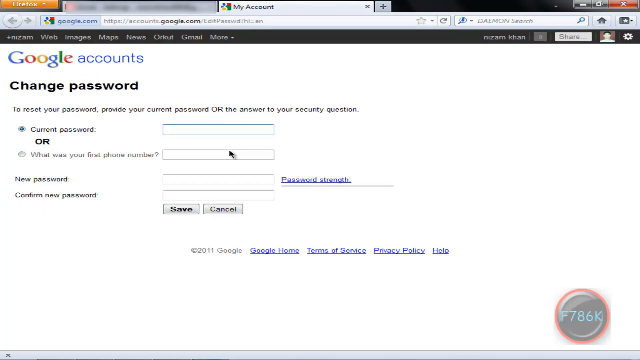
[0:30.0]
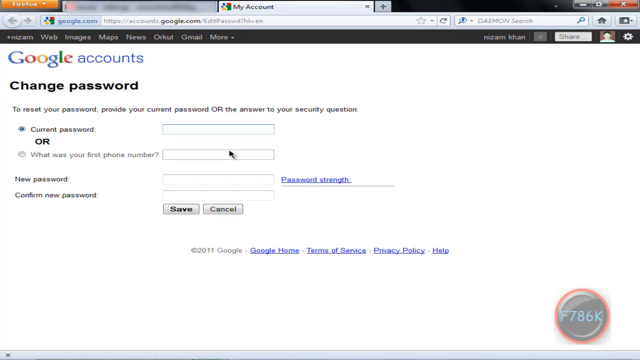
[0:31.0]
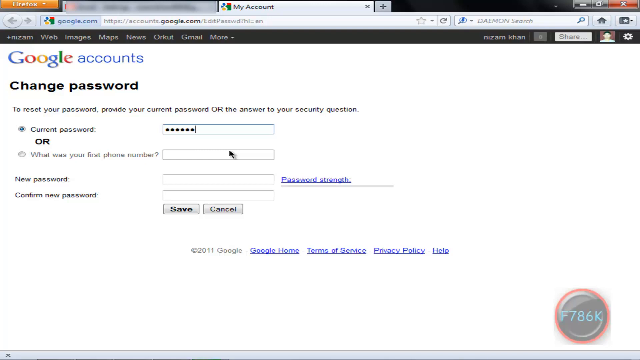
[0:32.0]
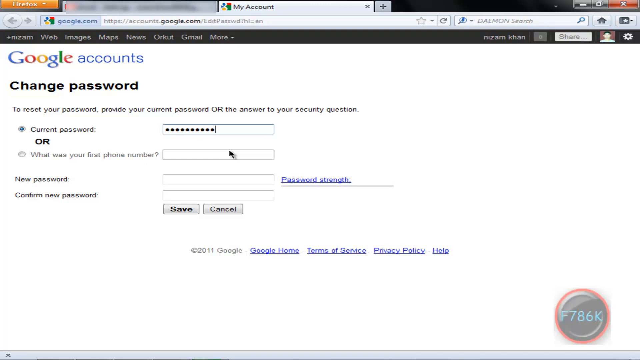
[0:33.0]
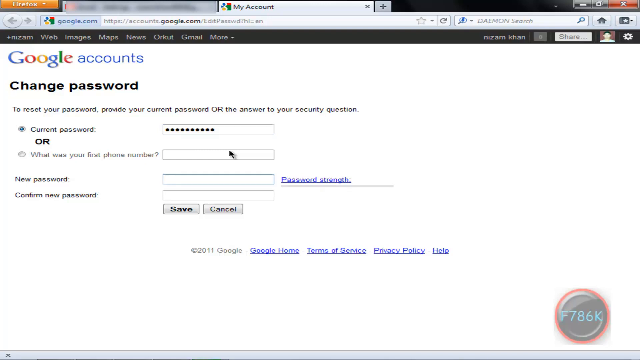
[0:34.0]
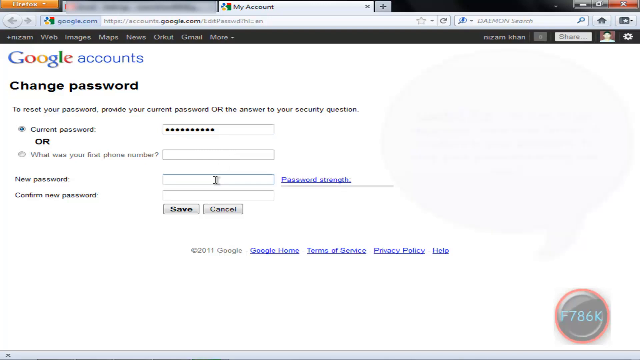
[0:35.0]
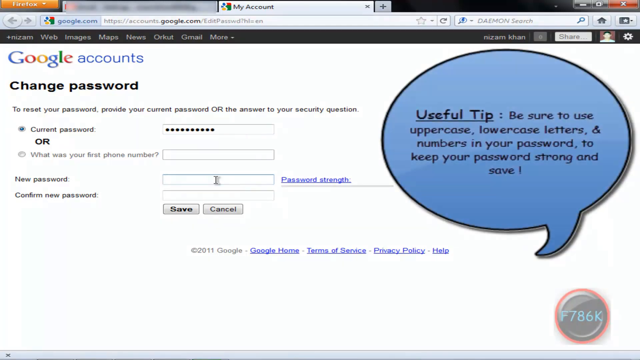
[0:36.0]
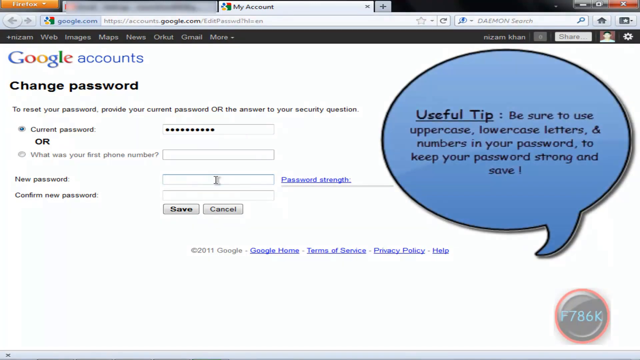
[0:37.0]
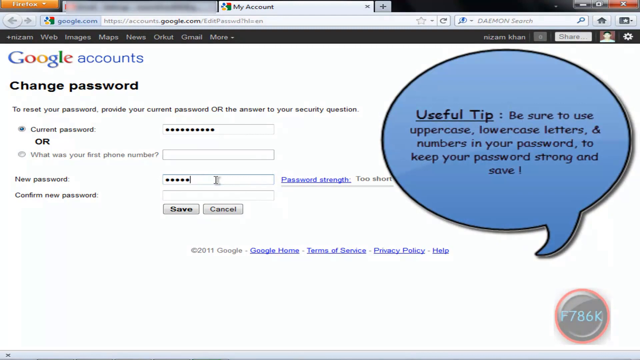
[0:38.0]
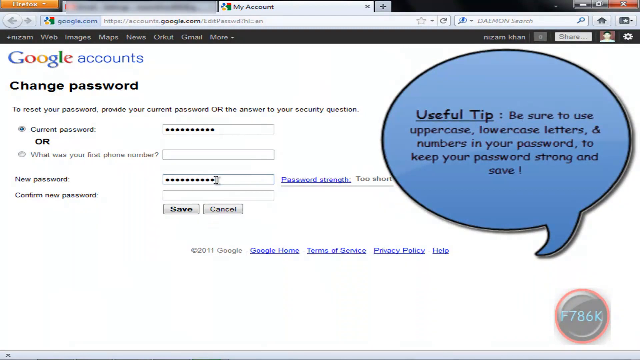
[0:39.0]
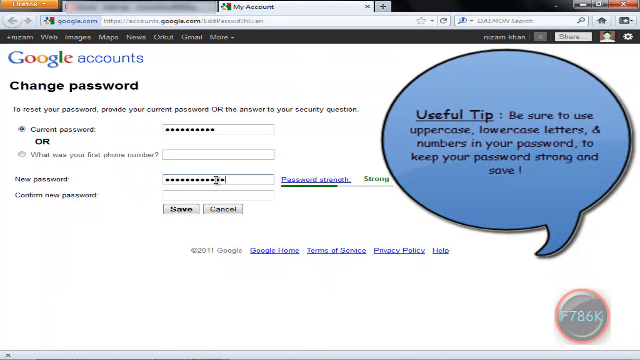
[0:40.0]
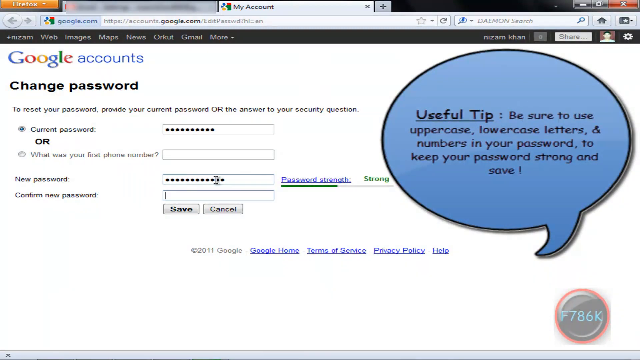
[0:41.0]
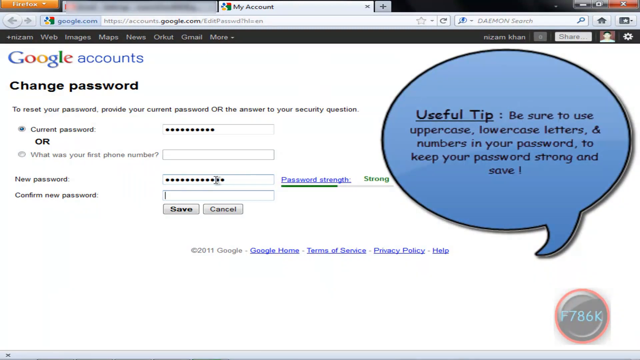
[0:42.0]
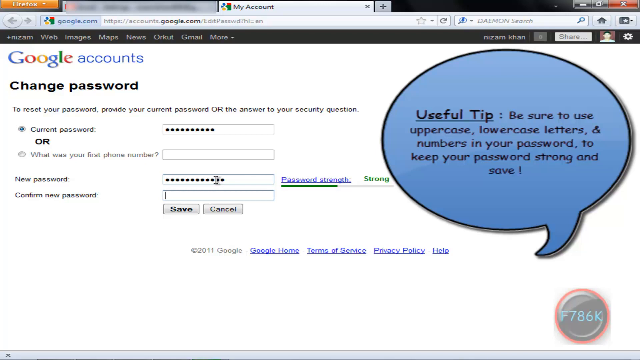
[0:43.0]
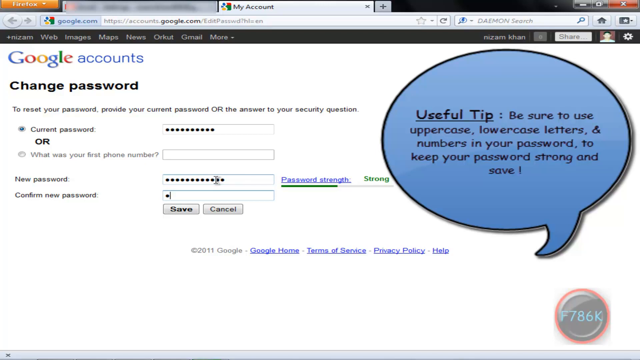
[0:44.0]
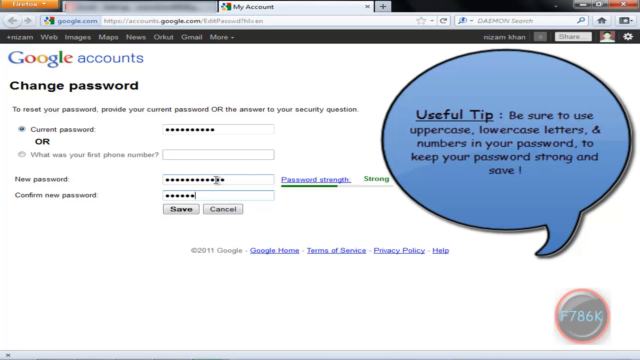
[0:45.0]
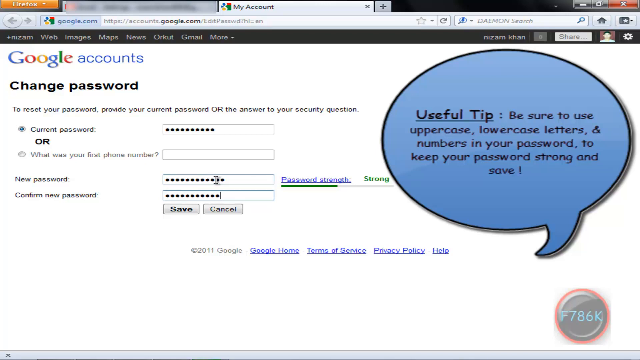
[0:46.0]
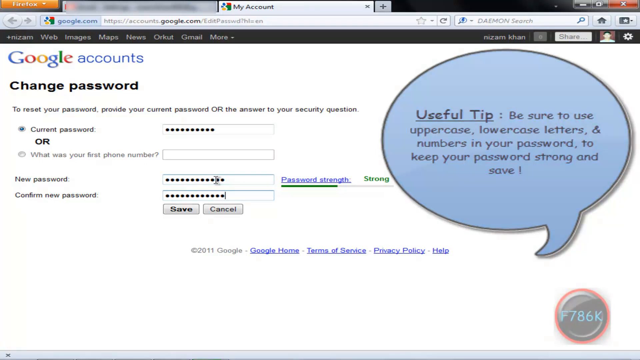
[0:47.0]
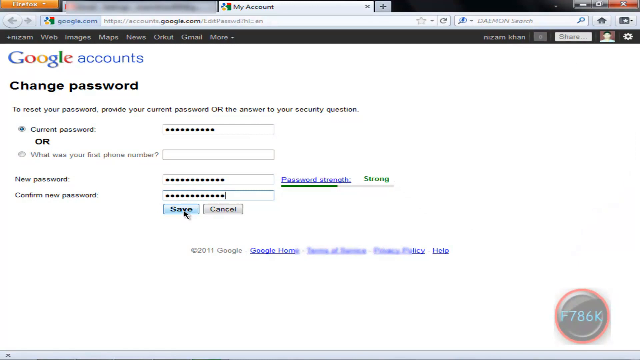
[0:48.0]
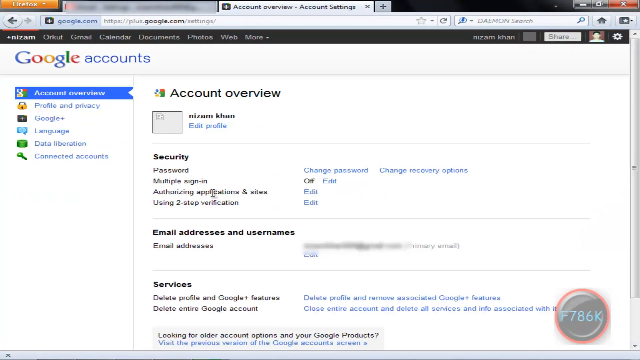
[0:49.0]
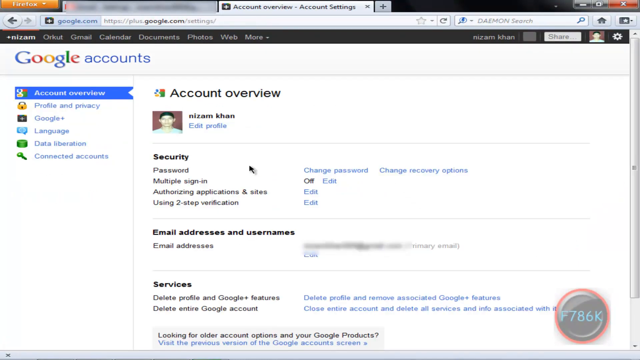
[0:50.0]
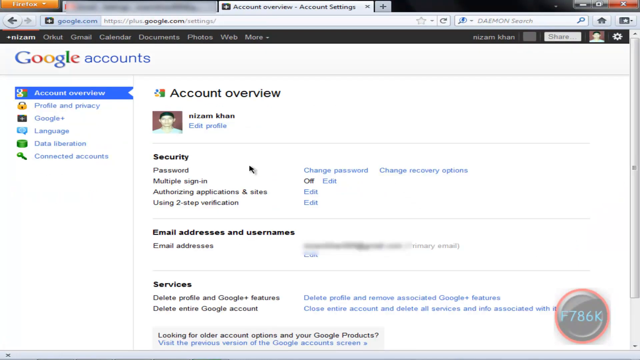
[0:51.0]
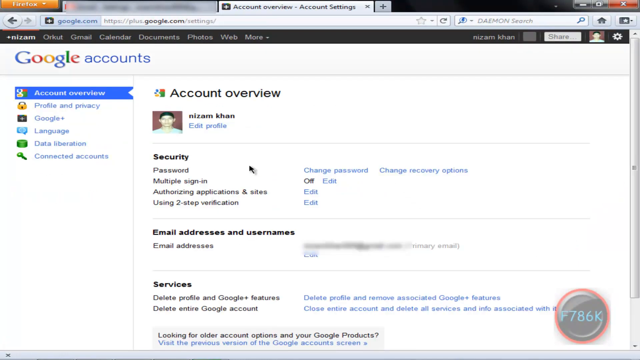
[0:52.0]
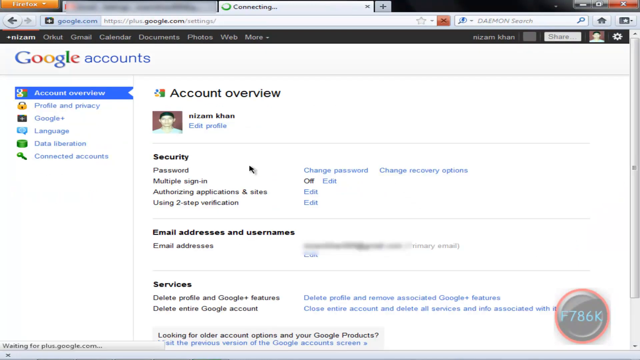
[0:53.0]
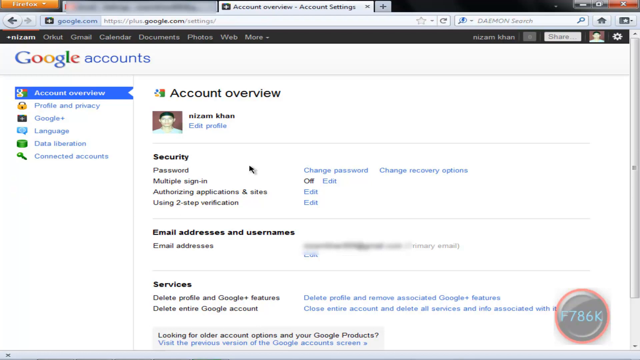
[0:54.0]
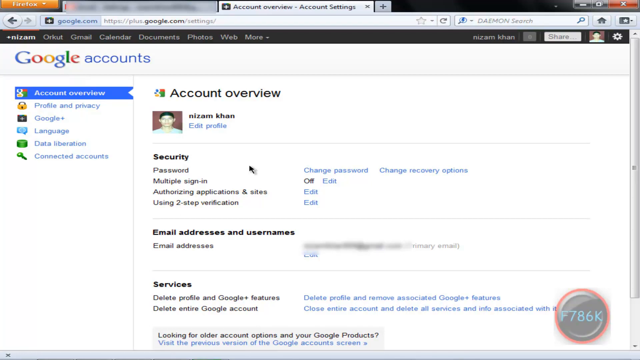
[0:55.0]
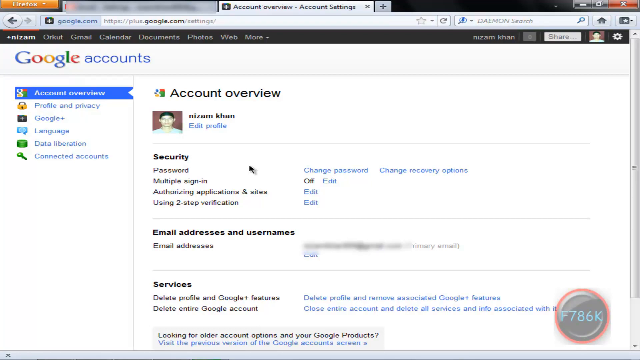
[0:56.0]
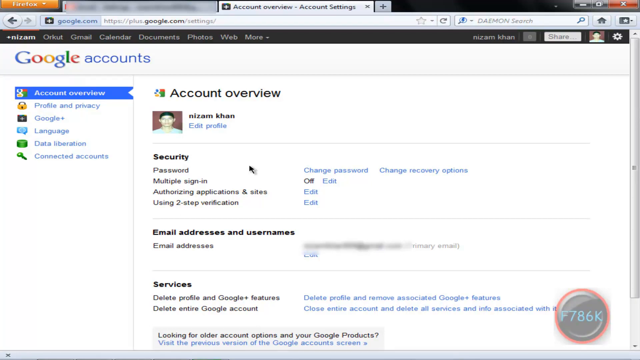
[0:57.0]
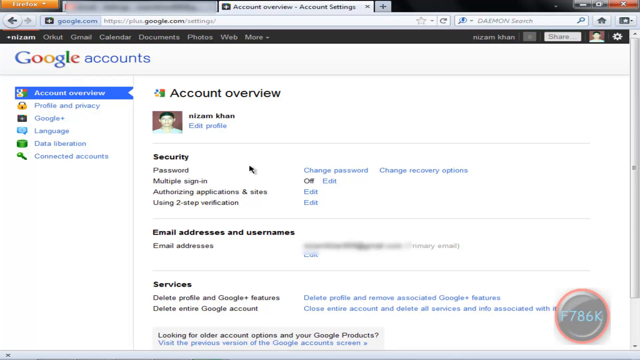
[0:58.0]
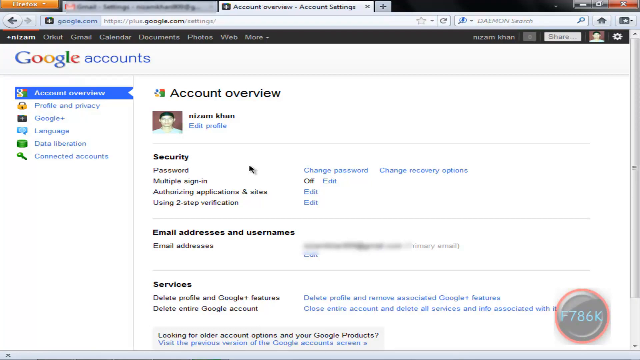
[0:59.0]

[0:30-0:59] The cursor is in the current password field, and the person types in their current password, which is censored with black dots and is 10 characters long. They move the cursor to the new password field, and on the right side of the recording a huge blue speech bubble with a black outline appears, with black writing inside that reads "useful tip be sure to use uppercase lowercase letters and numbers in your password to keep your password strong and safe". As they type the new password, the password strength indicator updates dynamically: at first it shows "too short", and eventually it shows "strong", with the word turning green and the strength progress bar filled halfway in green. They go to the confirm new password field and type the same password, then move the cursor to two options, "save" and "cancel", and click save. The Google accounts page then brings them to their account overview, one of six tabs available in Google accounts, showing the name Nizam Khan and a profile picture. The other tabs read "Profile and Privacy", "Google+", "Language", "Data Liberation", and "Connected Accounts".